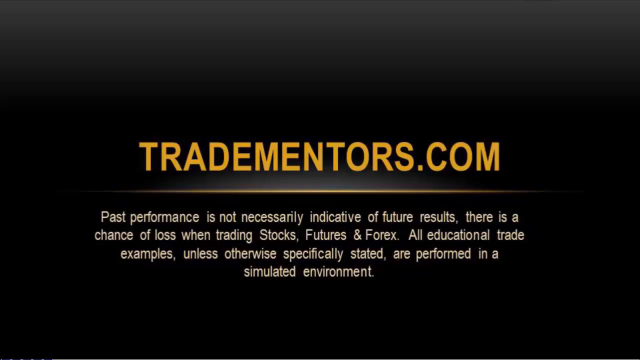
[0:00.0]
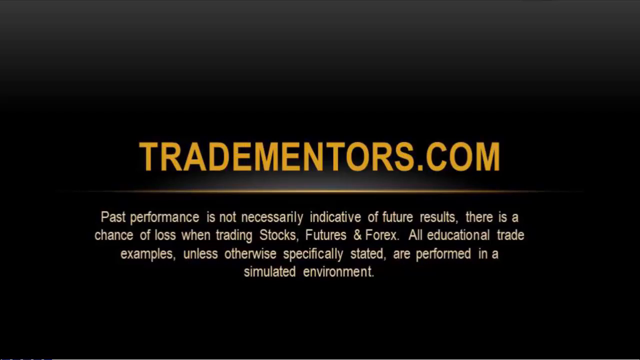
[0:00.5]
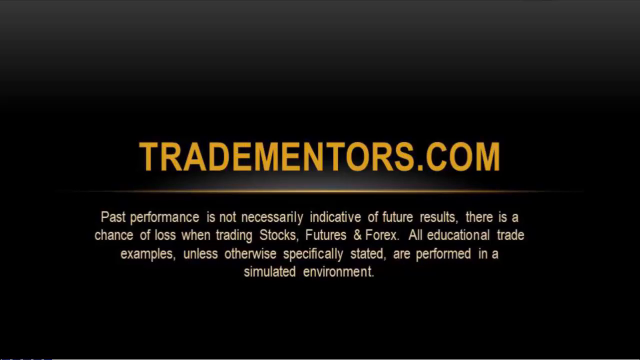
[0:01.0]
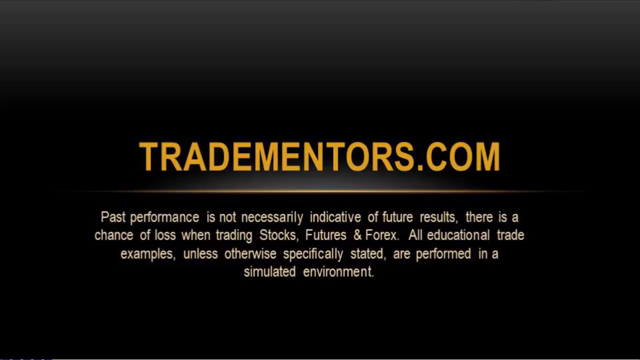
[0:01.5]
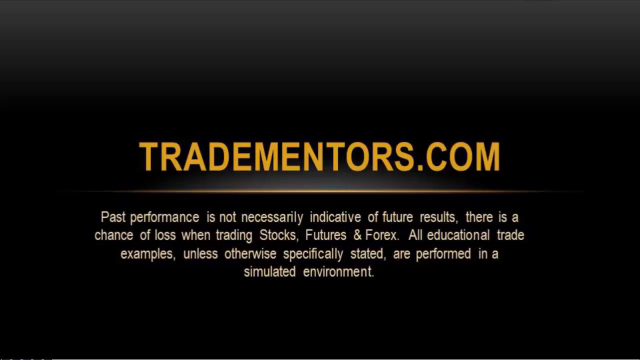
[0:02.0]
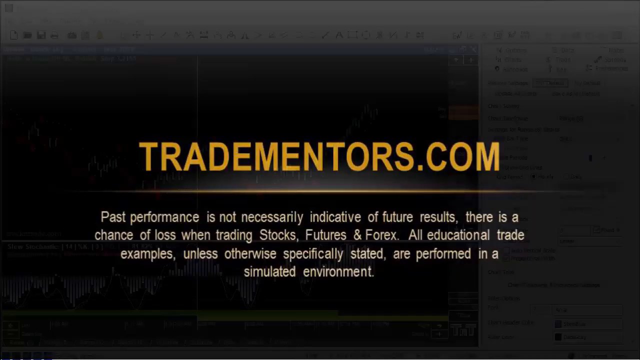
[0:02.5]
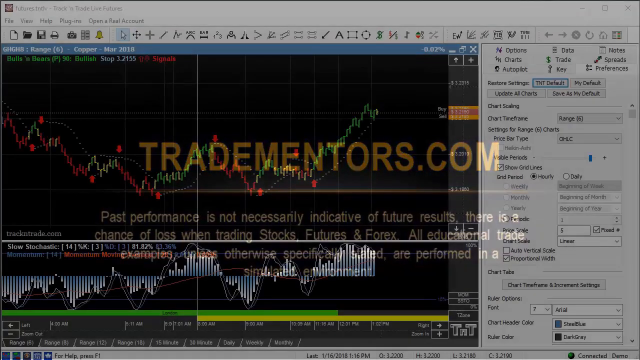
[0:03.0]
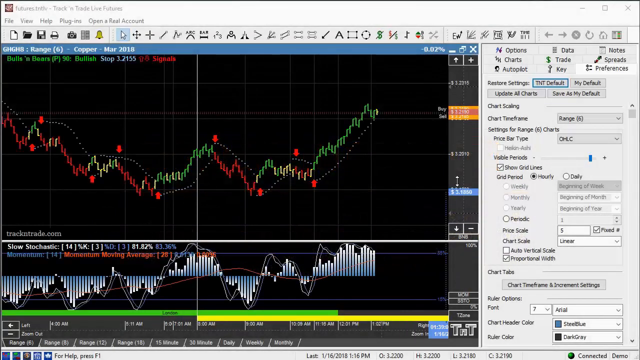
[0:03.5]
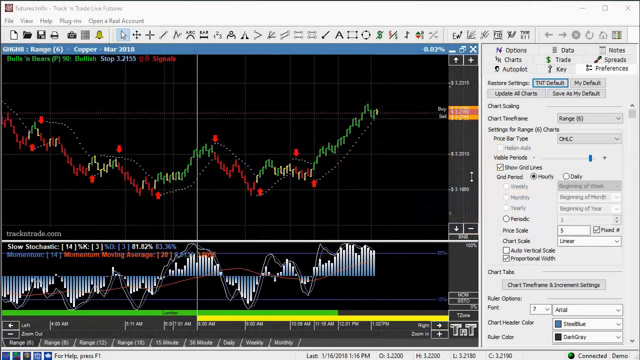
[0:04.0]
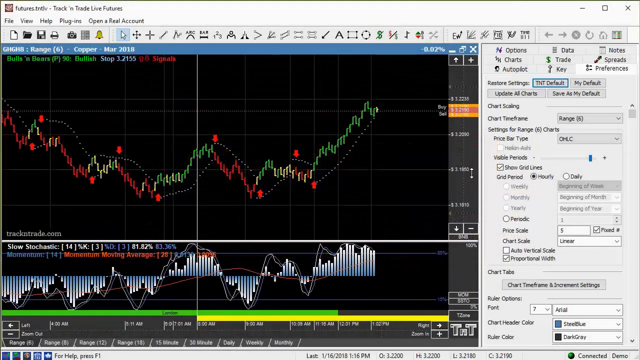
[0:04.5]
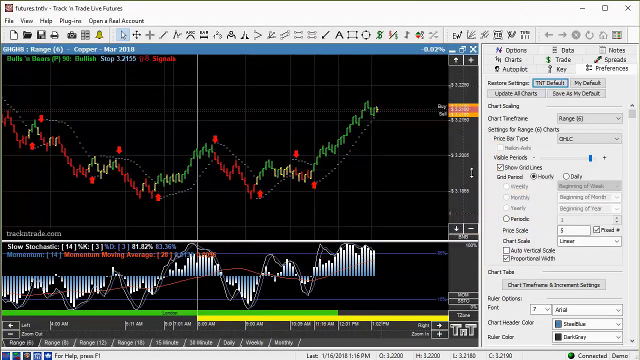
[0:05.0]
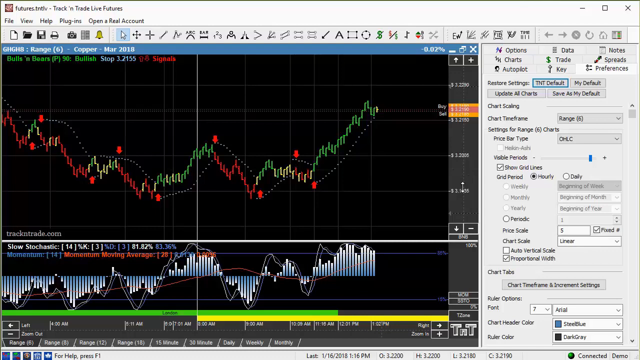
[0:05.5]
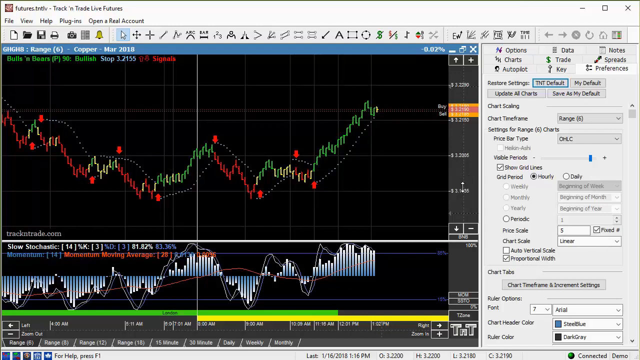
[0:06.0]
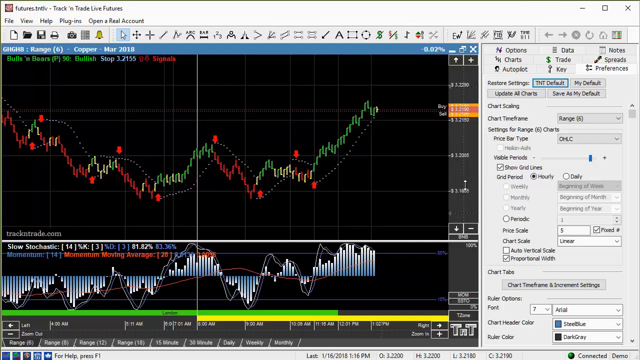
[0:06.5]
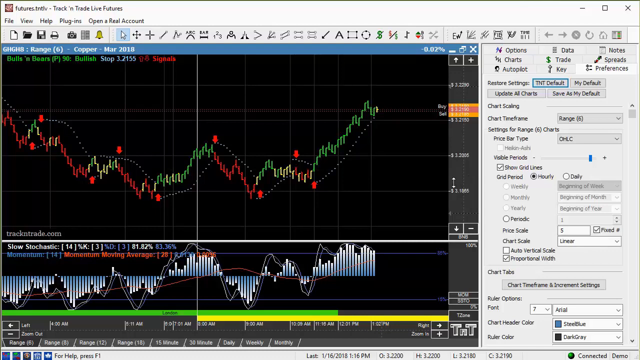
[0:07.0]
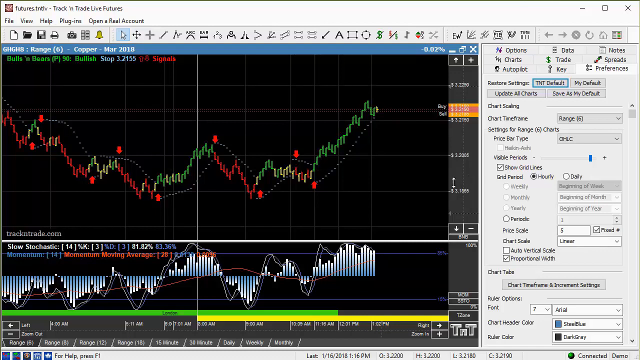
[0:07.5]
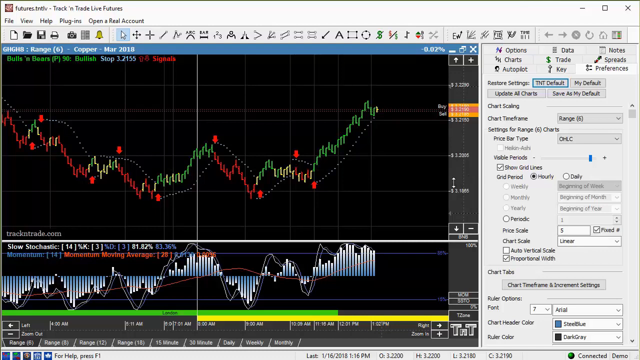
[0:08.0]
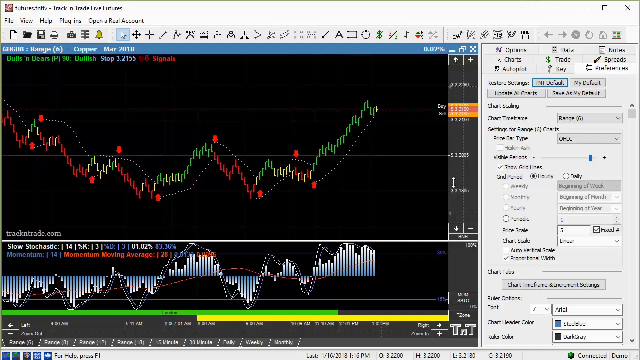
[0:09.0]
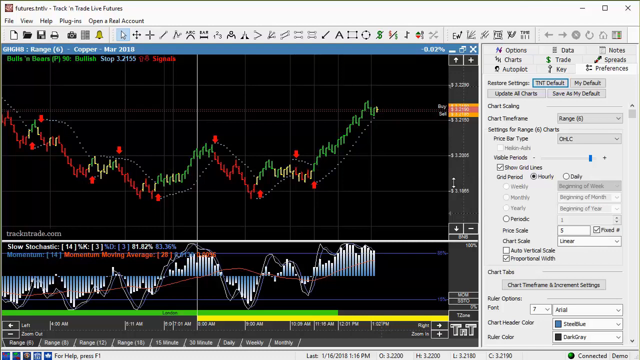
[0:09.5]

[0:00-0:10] The ad is for tradementors.com. Warning text appears: "past performance not necessarily indicative of future results" and "there is a chance of loss when trading." A computer screen then appears, showing something like "track and trade live futures." On it is a chart that is not quite a bar graph and not quite a line graph, but close, with red lines, little red marks, green, yellow, and what look like red lights. Lower down are bar graphs that go down, down, down, up, down, up, down, up. The cursor moves around a little. On the side are various options, including chart scaling, laid out somewhat like a spreadsheet.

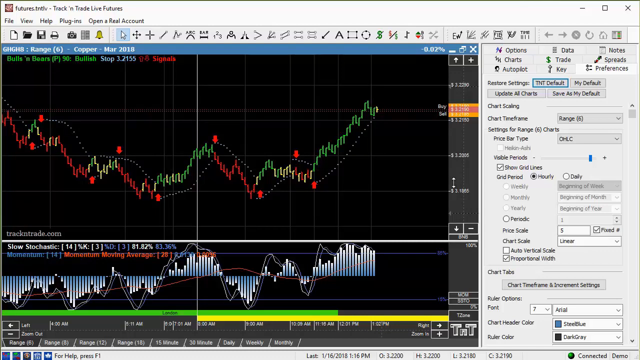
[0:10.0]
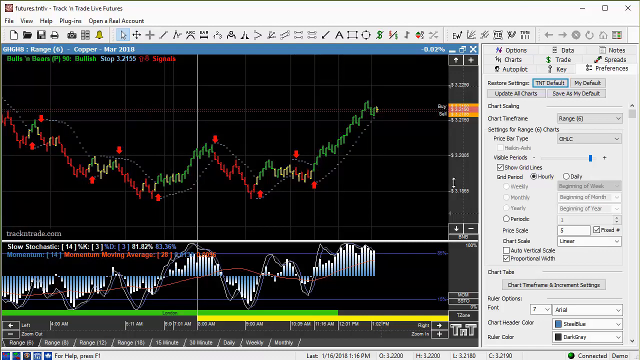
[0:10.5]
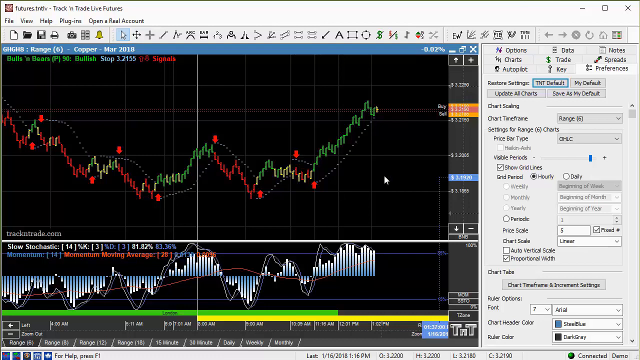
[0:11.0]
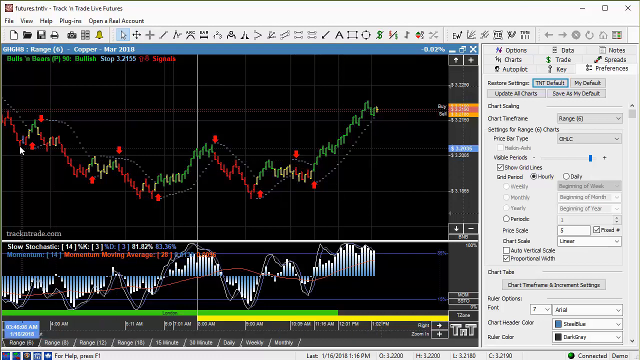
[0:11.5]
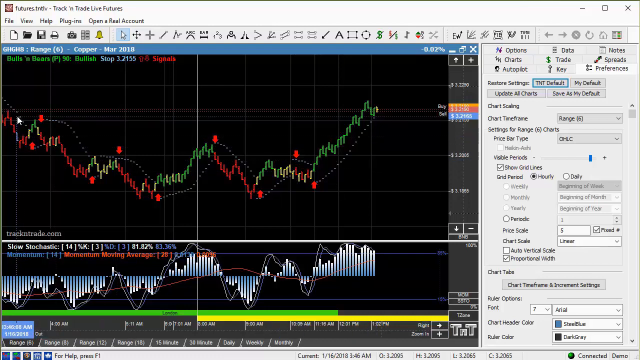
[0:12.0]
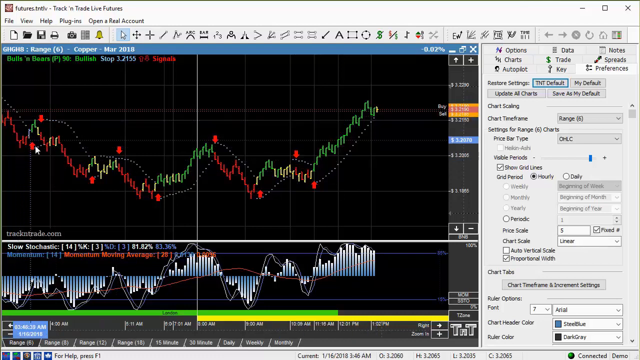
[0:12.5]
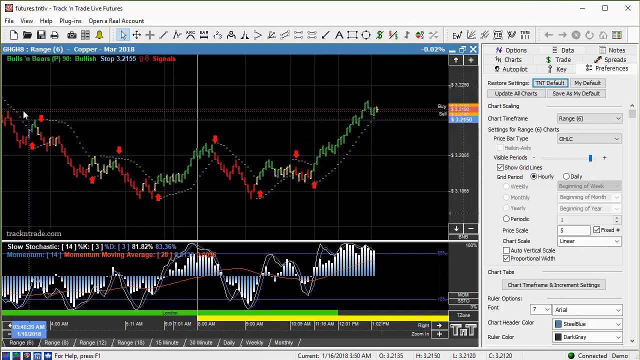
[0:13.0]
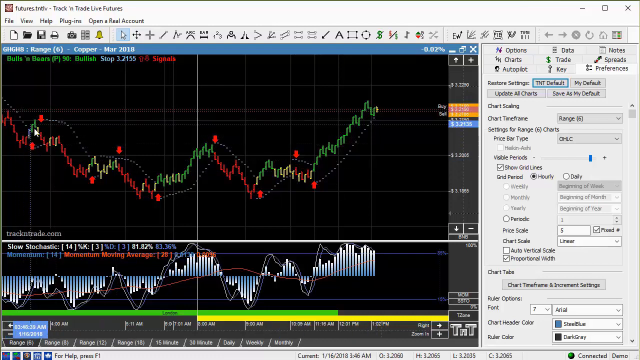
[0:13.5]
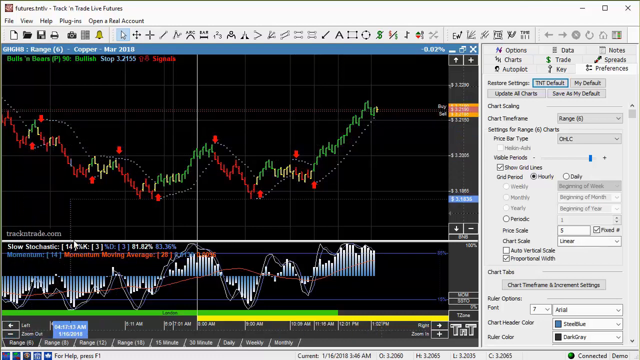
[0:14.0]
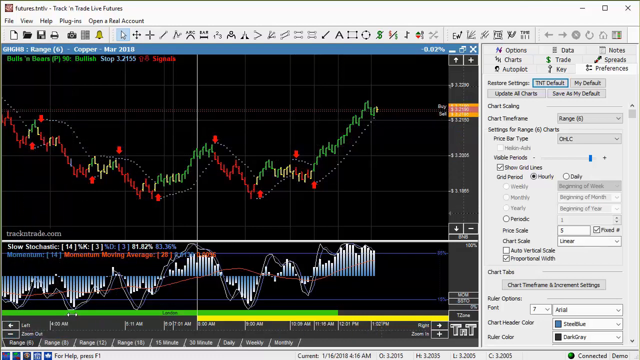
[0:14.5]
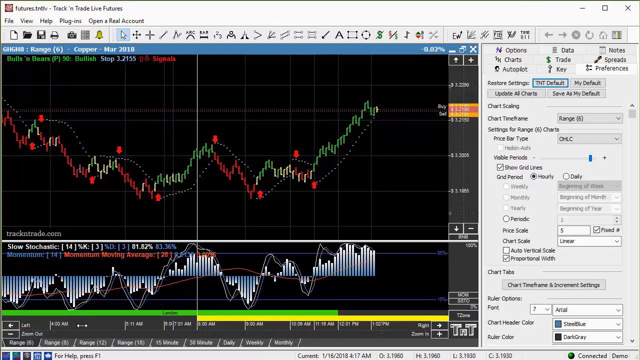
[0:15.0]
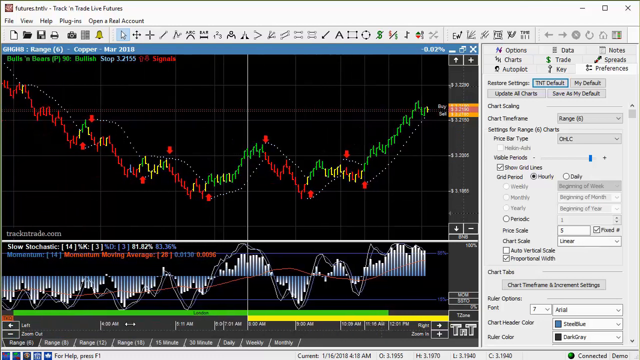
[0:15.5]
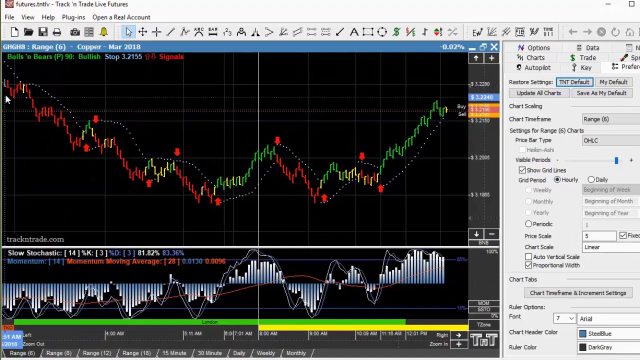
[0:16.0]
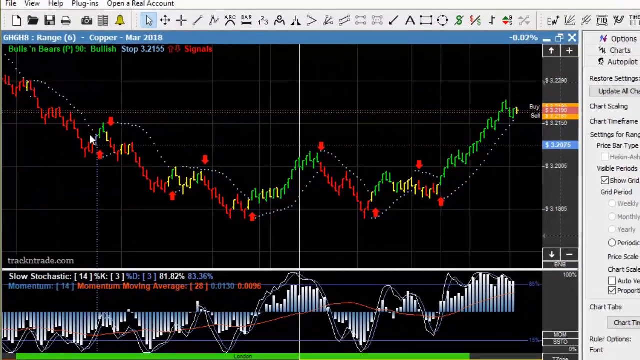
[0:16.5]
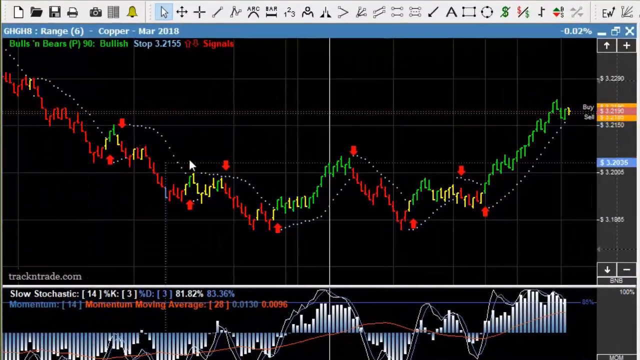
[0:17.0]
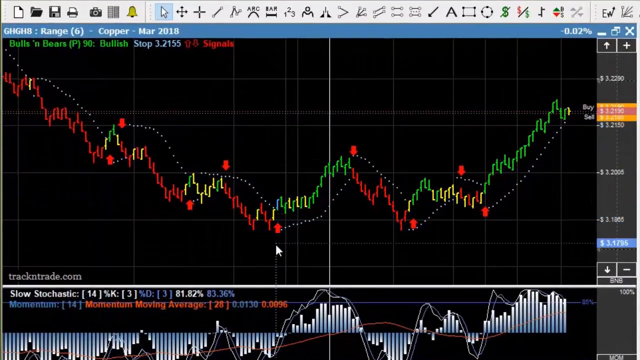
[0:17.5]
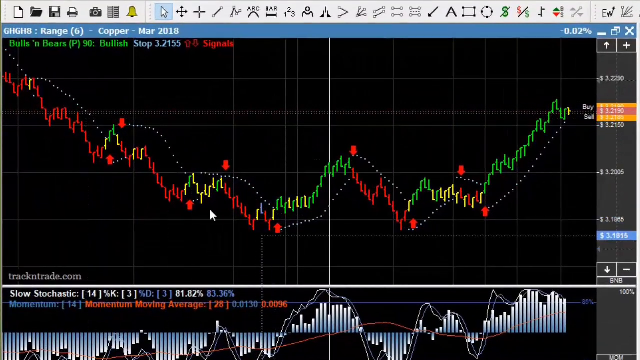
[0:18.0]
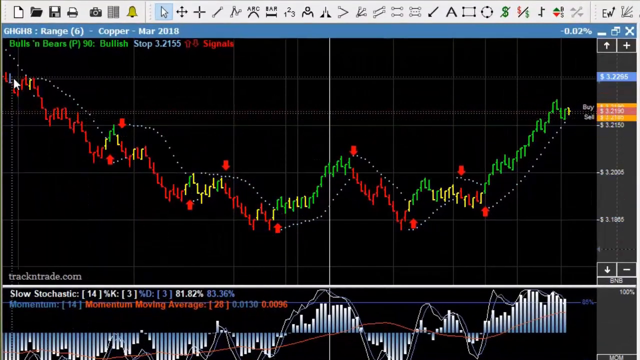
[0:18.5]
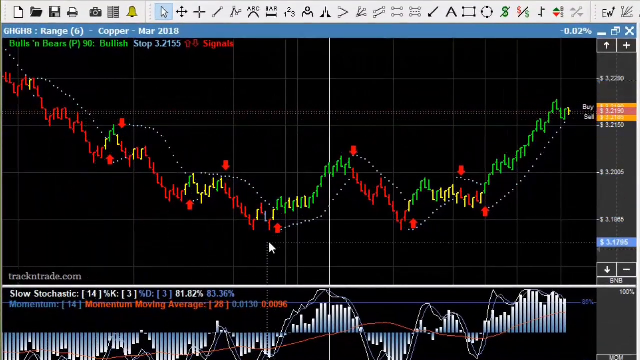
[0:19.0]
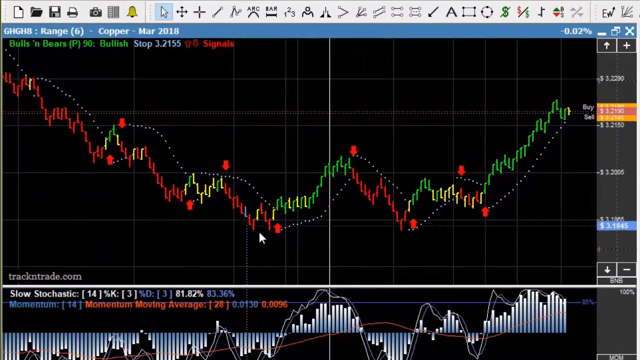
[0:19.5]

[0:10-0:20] The computer screen shows menu items "File," "View," "Help," "Plugins," "Open," and "Real Account," along with "Track and Trade, Live Futures." A graph fills the display, with elements at the top and bottom, and on the right-hand side are options for settings, charts and "show the grid lines." At the bottom is a bar graph where the bars go down, down, down, then a section goes up, back down, then up, down just a little, and then up. The cursor moves up and down, and the focus shifts to the top part; as the cursor moves, a blue element off to the side moves up and down with it. Grid lines are visible, along with red, green and yellow. Text somewhere reads "range six copper, March 2018."